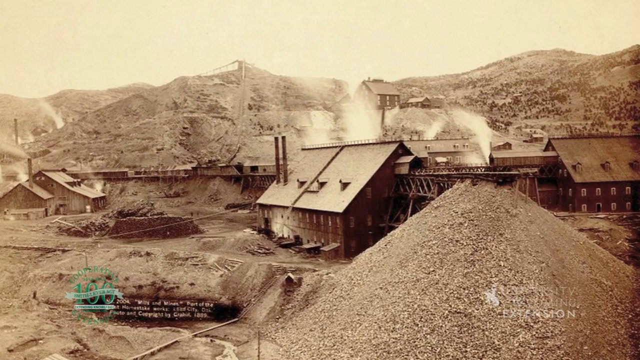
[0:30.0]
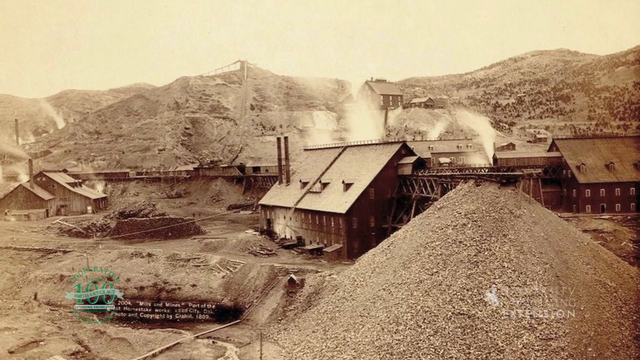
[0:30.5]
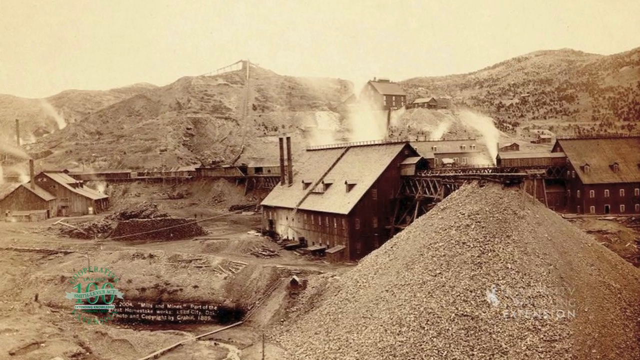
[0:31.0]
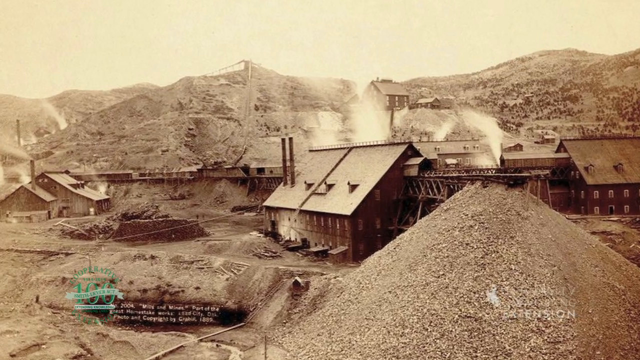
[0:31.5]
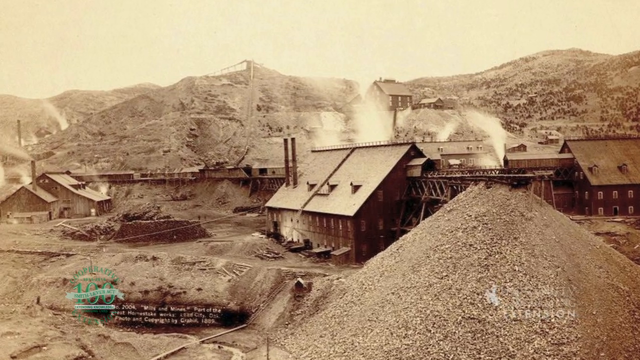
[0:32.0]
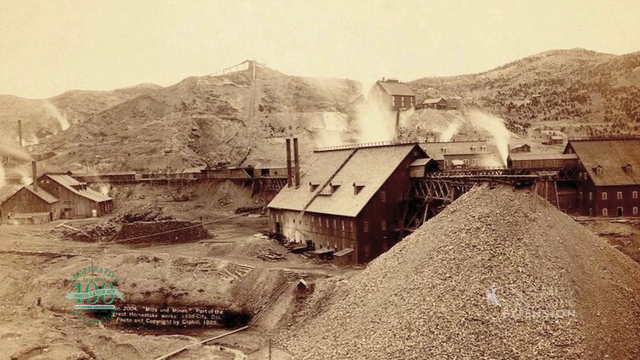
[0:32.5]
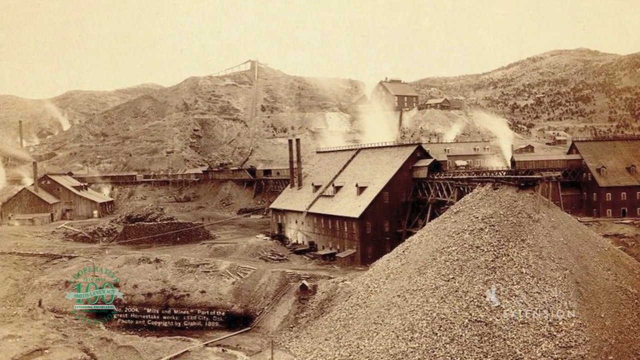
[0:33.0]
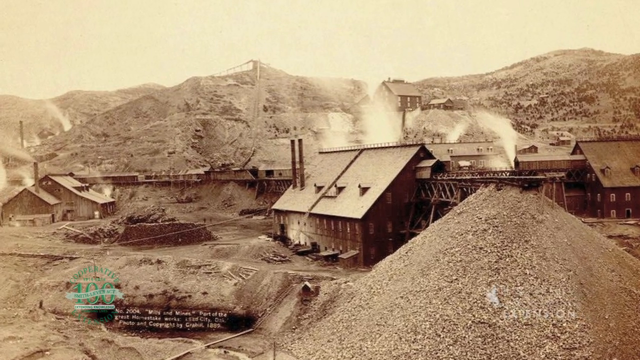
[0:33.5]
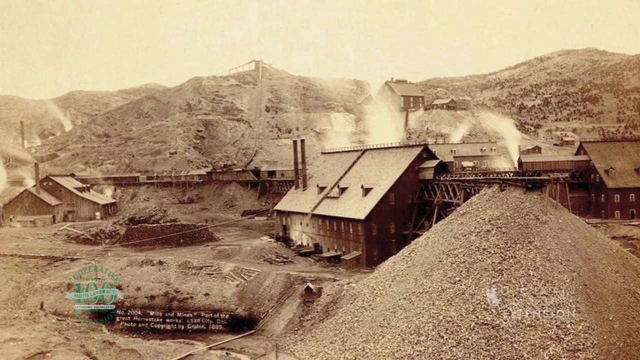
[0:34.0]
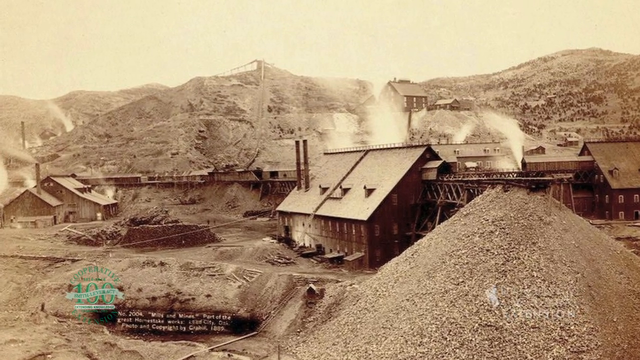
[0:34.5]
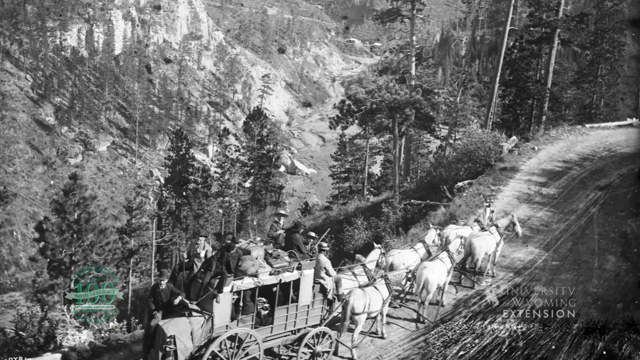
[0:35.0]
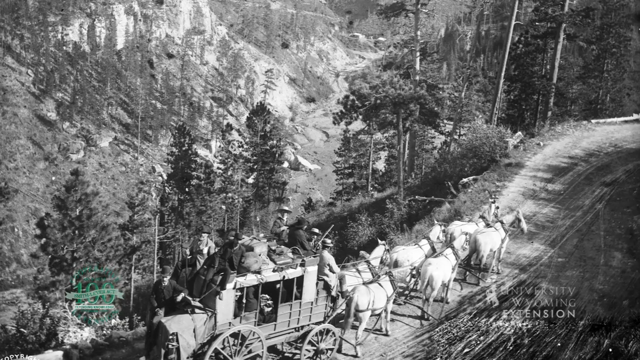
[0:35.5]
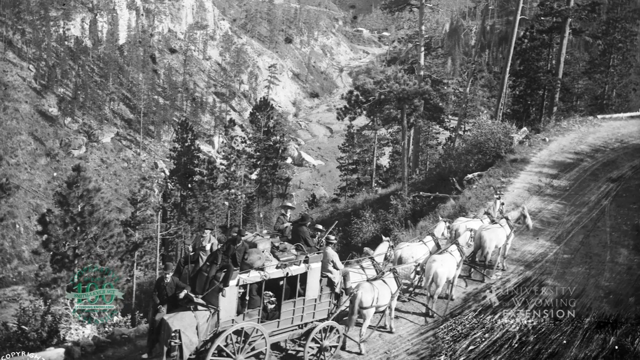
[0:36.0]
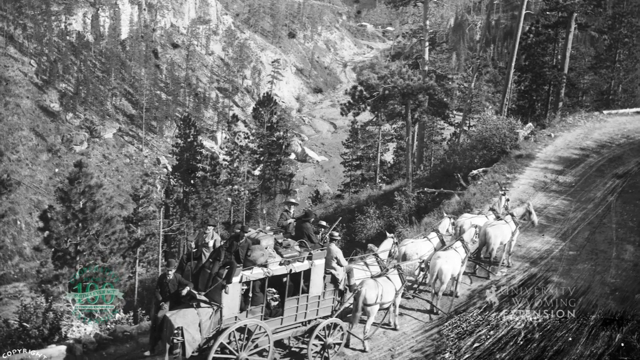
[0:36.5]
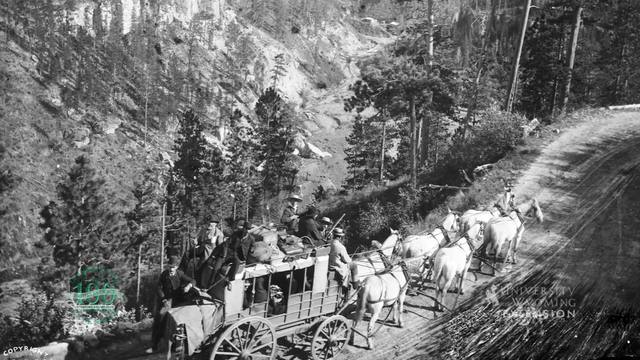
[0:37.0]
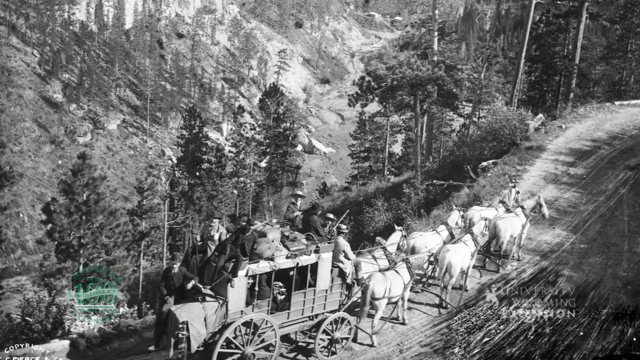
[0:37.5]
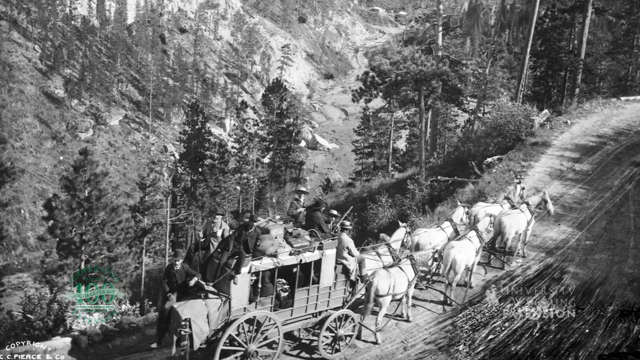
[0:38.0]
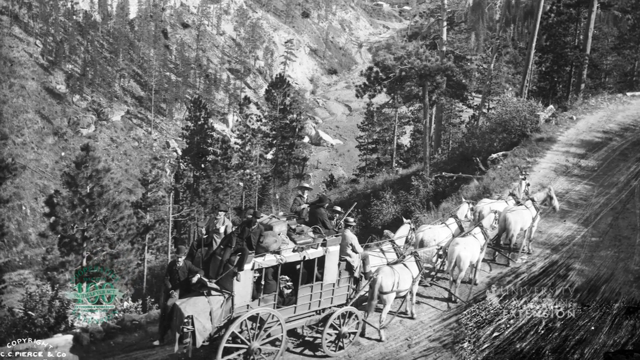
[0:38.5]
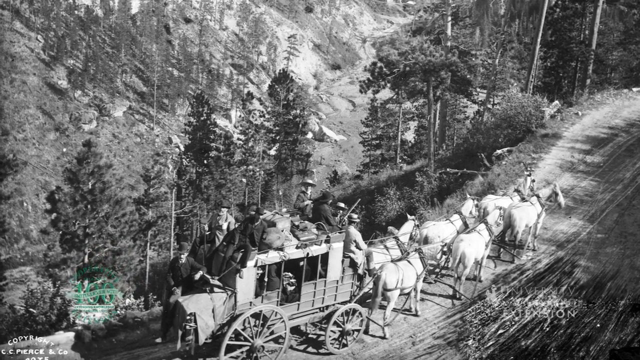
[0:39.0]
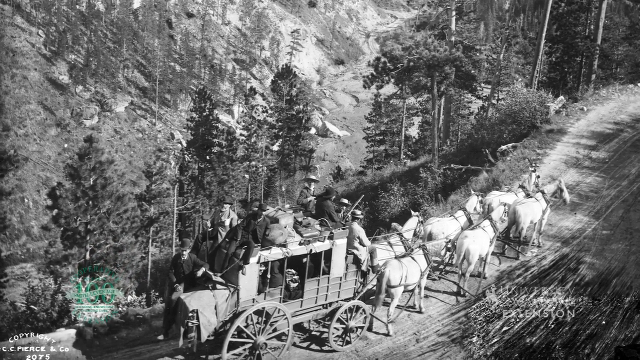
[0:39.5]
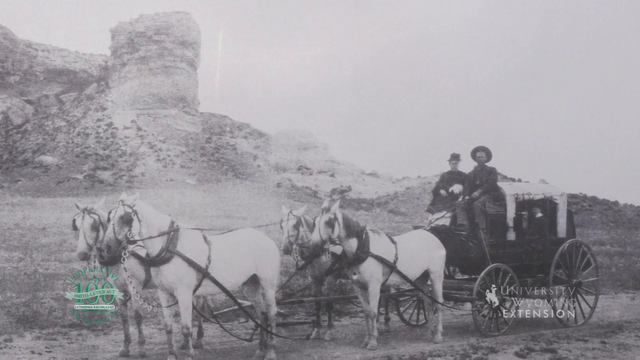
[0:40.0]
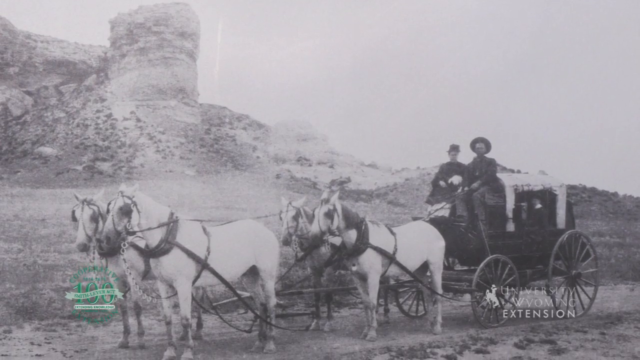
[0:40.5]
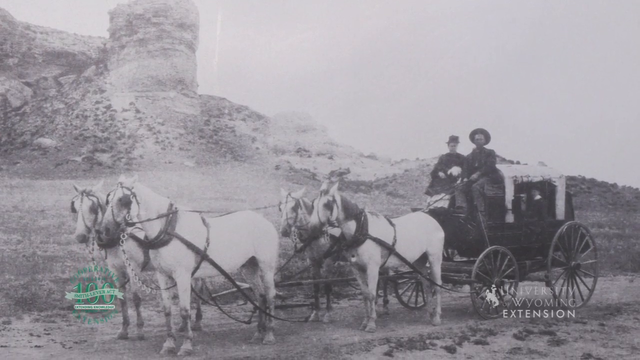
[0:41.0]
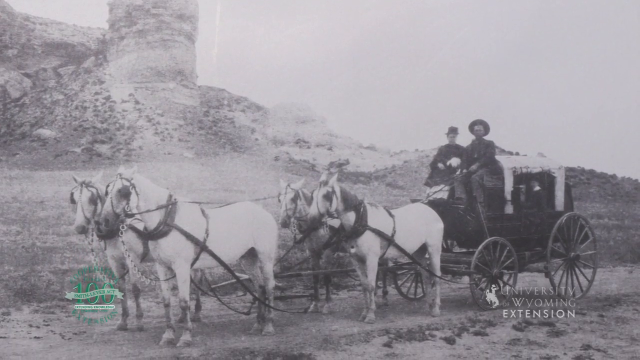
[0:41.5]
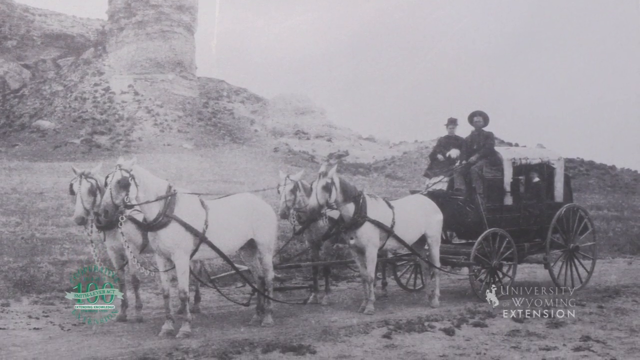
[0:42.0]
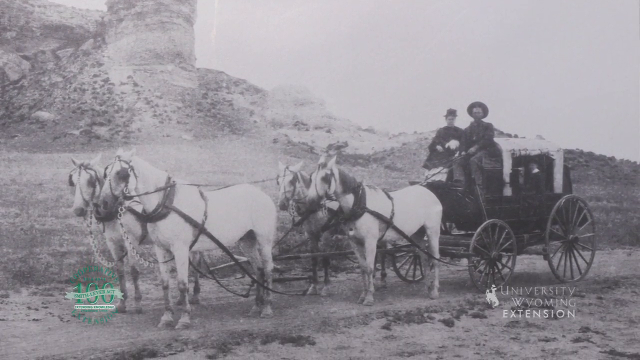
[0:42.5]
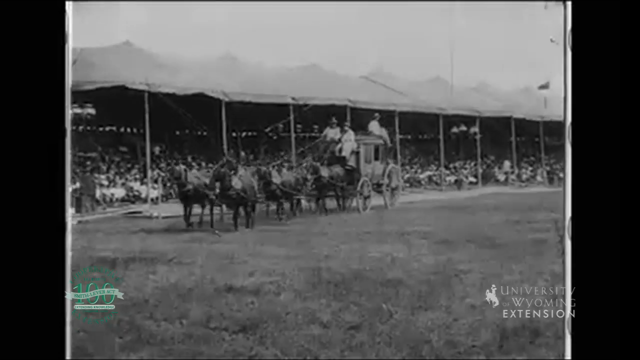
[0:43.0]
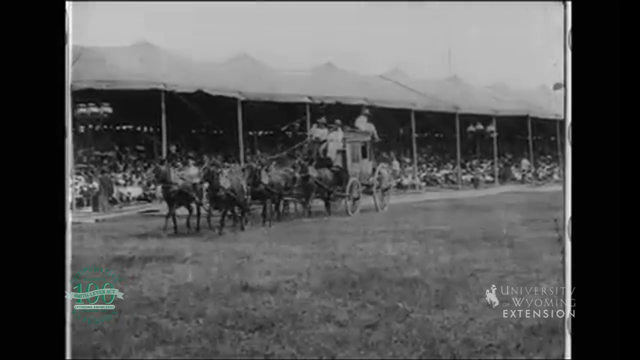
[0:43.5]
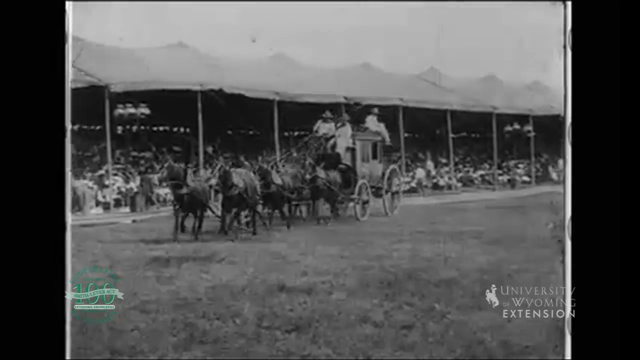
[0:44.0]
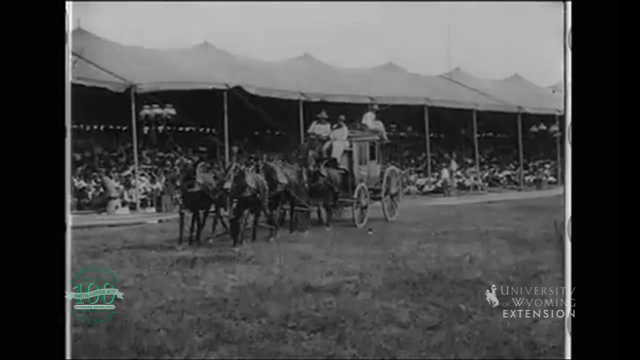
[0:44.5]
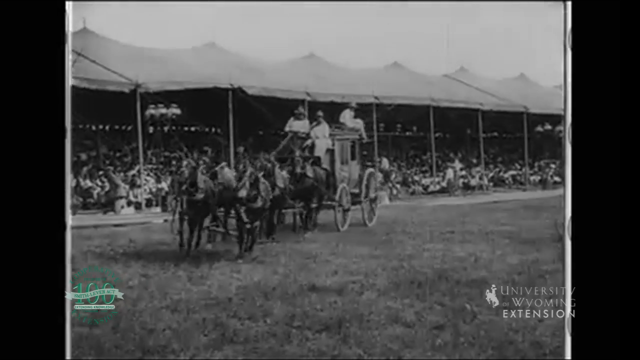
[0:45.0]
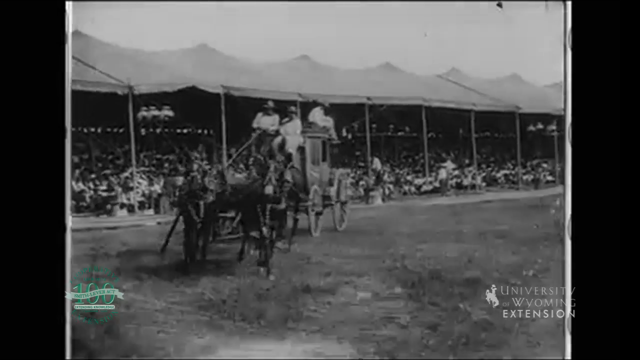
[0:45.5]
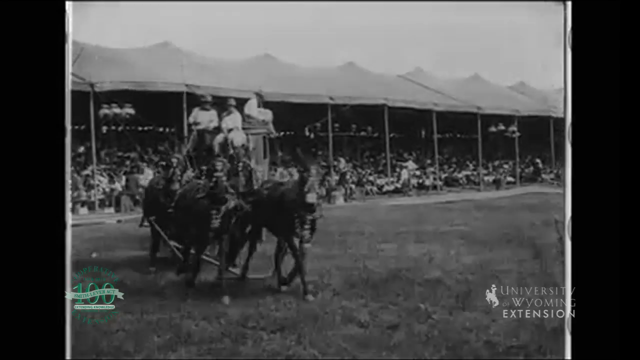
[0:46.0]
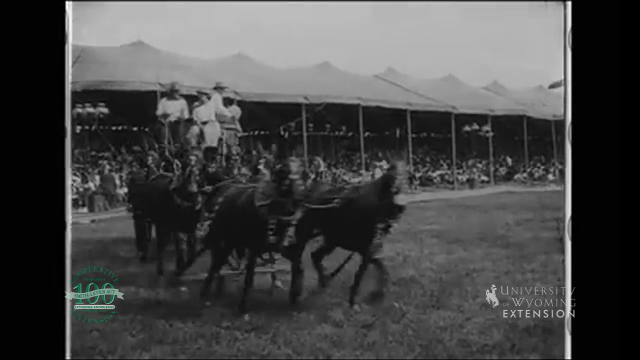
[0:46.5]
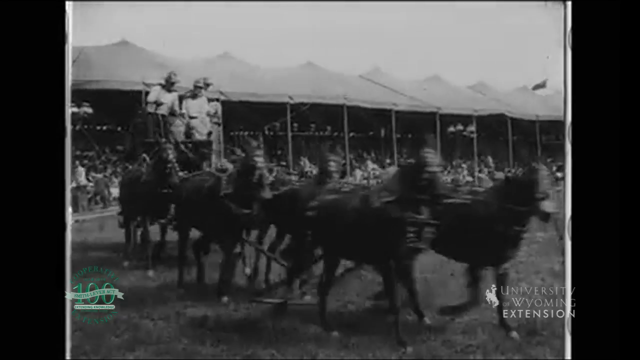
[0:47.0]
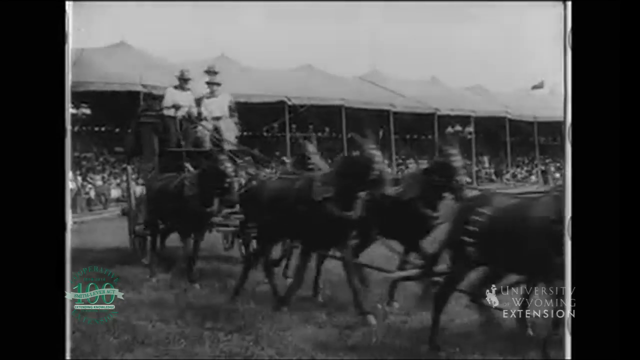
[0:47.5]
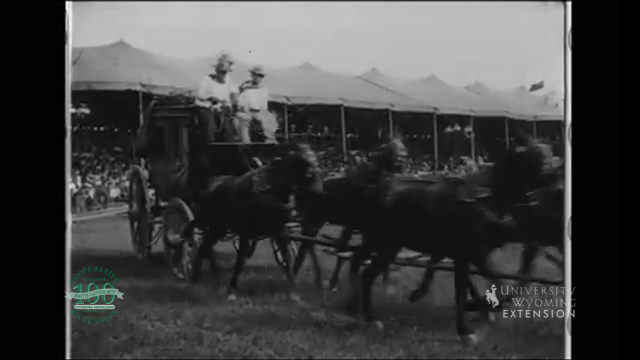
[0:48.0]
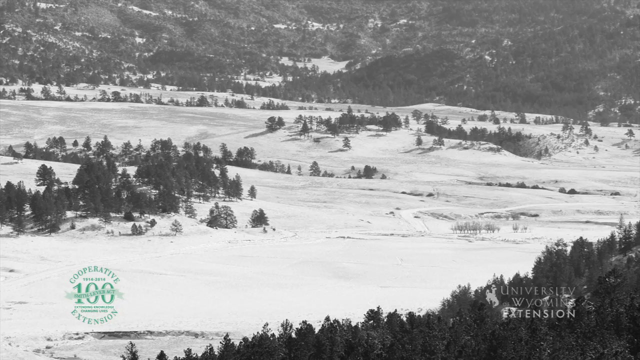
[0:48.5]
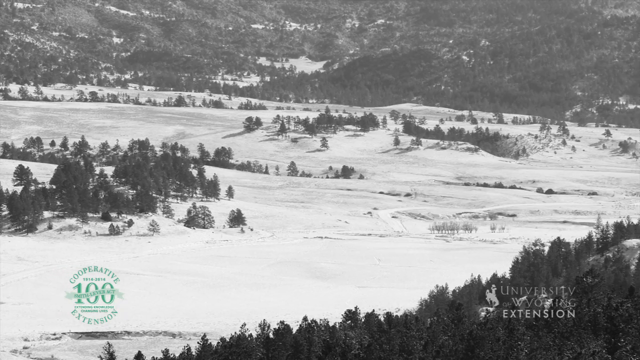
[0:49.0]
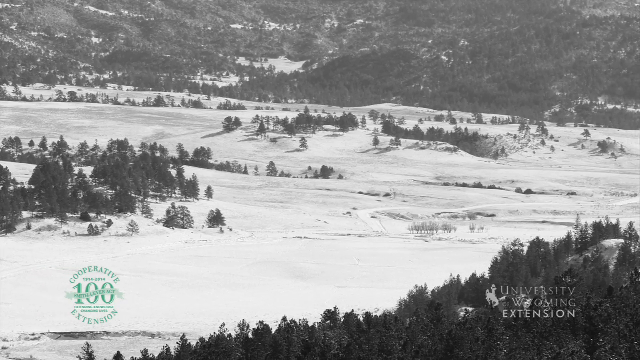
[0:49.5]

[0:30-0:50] An image that is not black and white but more of a gold color looks like an old-time factory, with piles of stuff out in front of it and smoke coming out of the chimneys, as the camera slowly moves. It switches to a wilderness scene with a road and what looks like a carriage filled with people, some even sitting on top of it, pulled by six white horses, again with a slow camera move. Another image, in black and white, shows people out in the wilderness with four horses pulling a smaller carriage, with what looks like a man and a woman sitting in the front. Then it switches to video of a crowd underneath a canopy watching what looks to be a carriage with two men sitting in the front and one man sitting on top, driven by six horses. Another wilderness view follows.